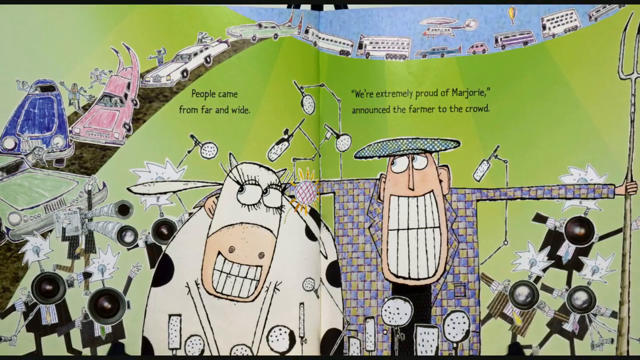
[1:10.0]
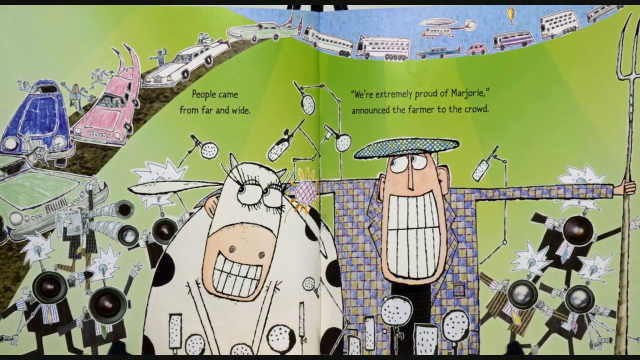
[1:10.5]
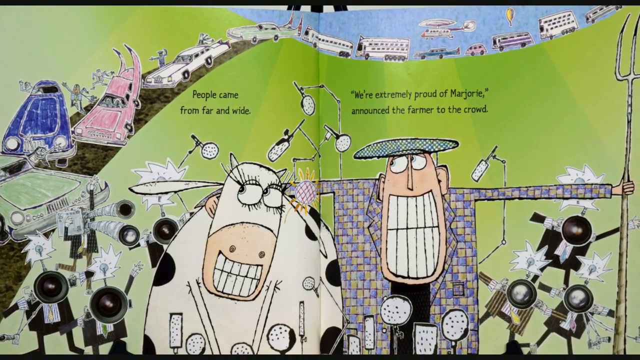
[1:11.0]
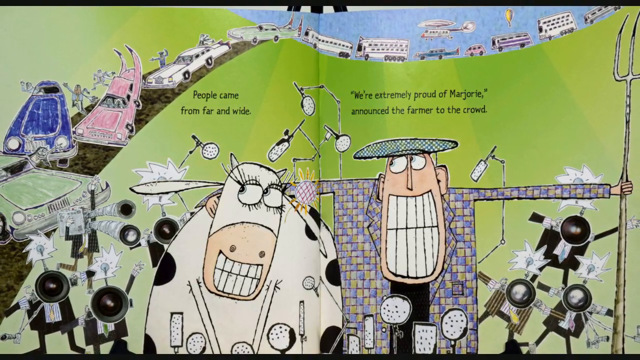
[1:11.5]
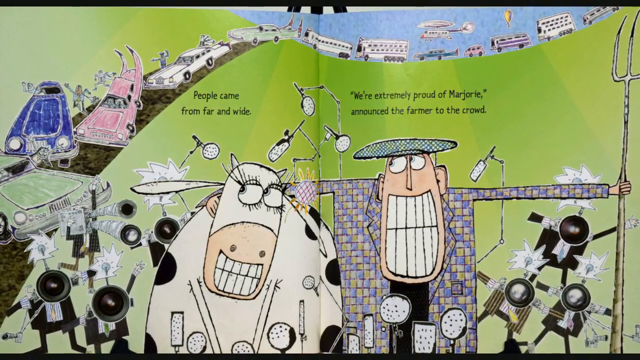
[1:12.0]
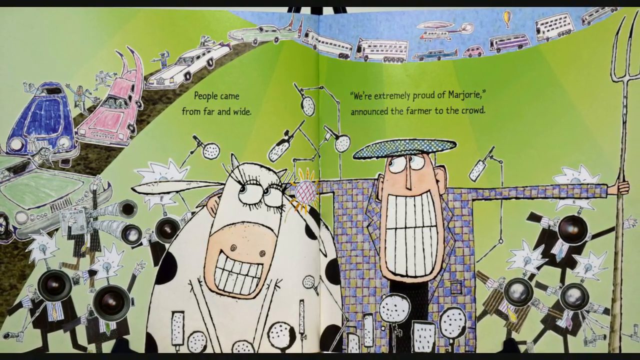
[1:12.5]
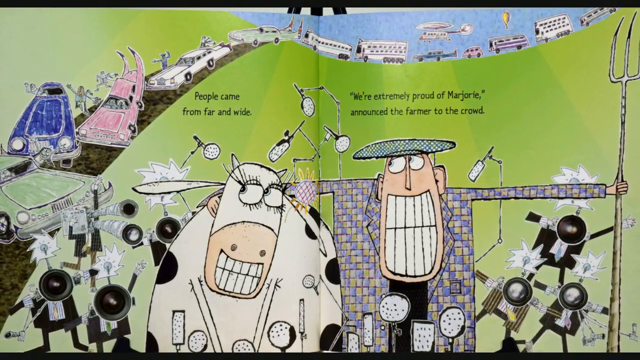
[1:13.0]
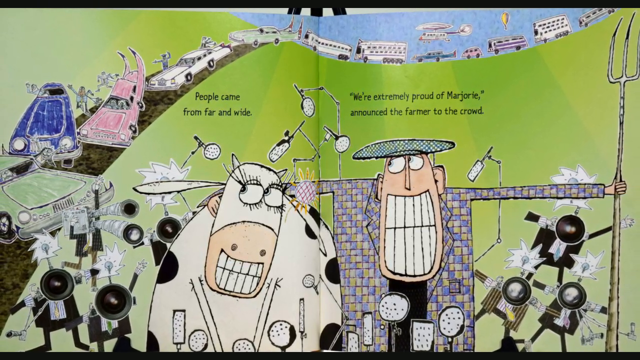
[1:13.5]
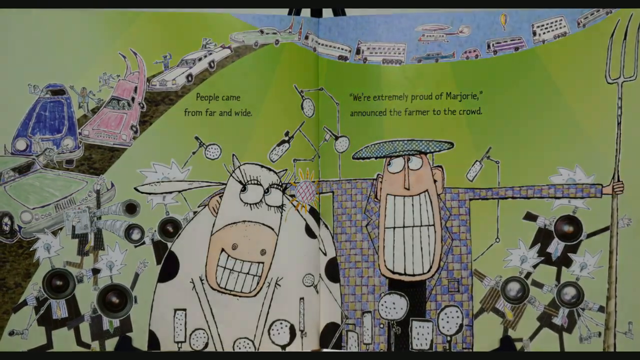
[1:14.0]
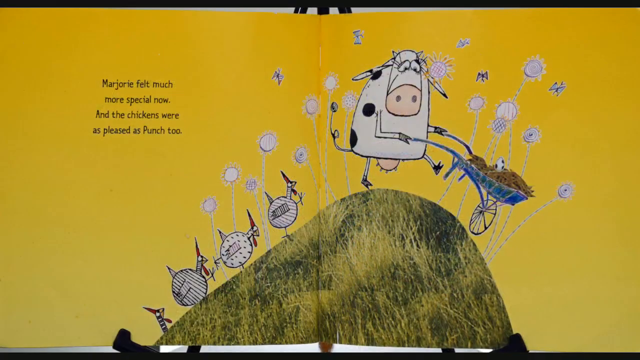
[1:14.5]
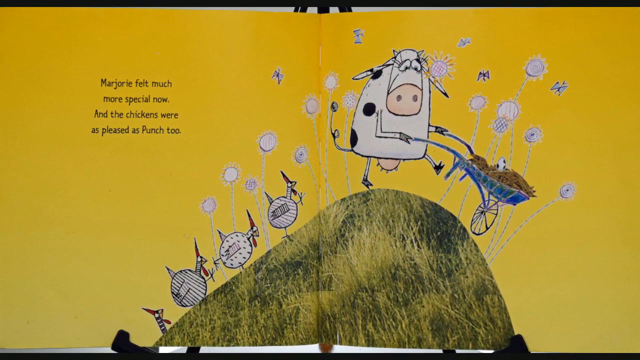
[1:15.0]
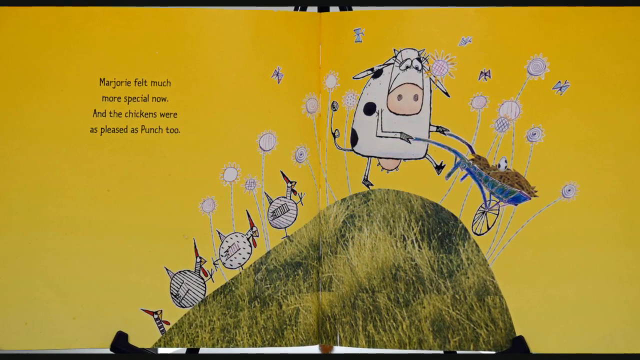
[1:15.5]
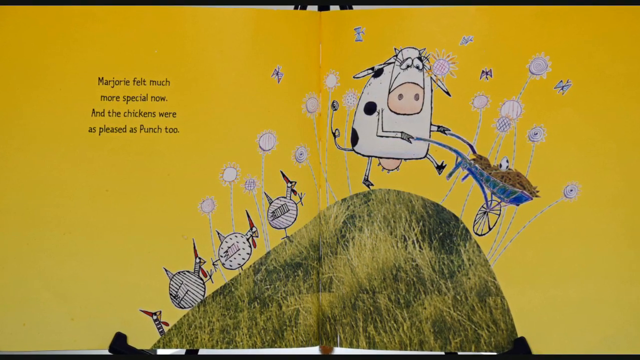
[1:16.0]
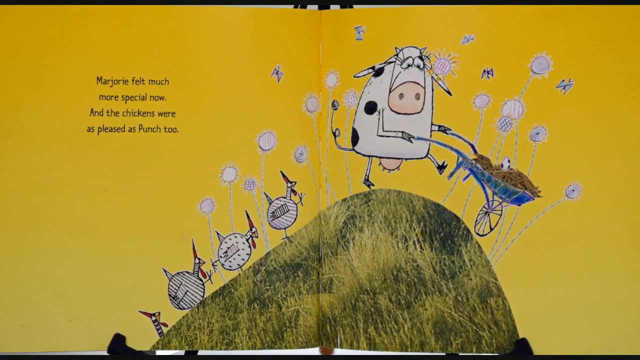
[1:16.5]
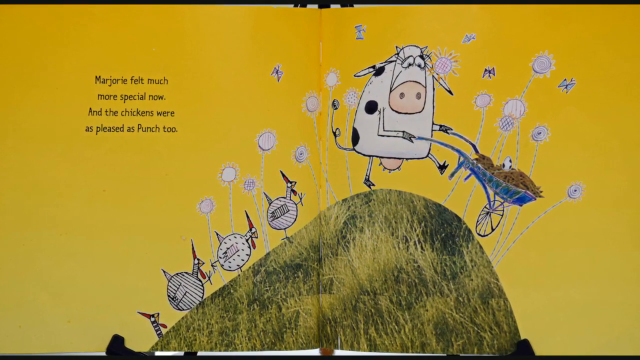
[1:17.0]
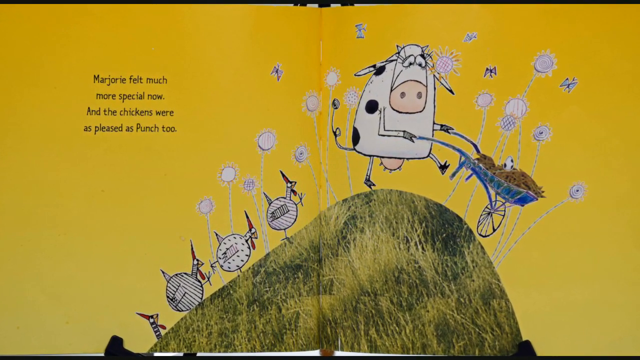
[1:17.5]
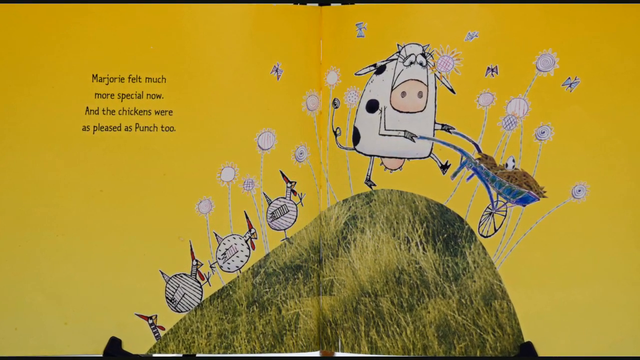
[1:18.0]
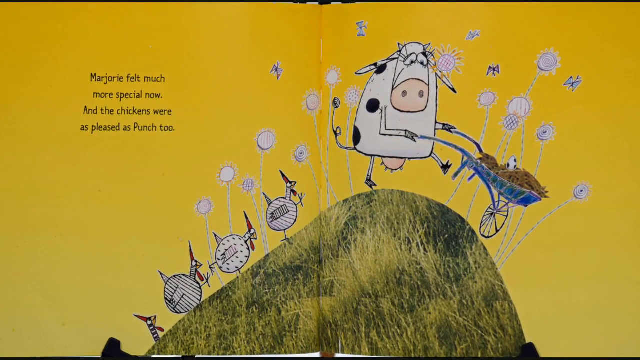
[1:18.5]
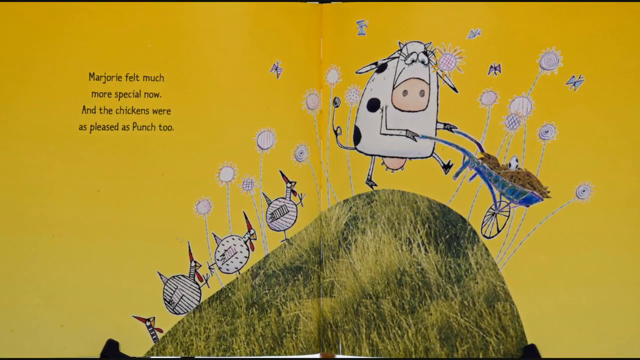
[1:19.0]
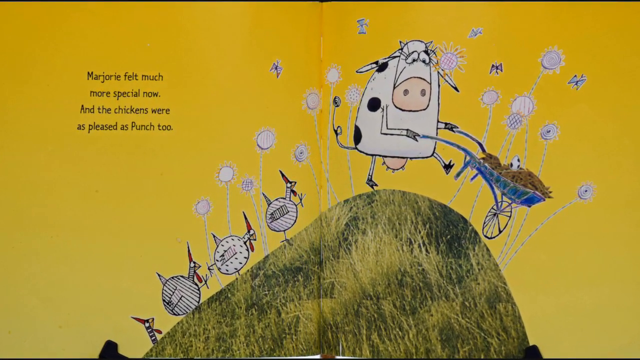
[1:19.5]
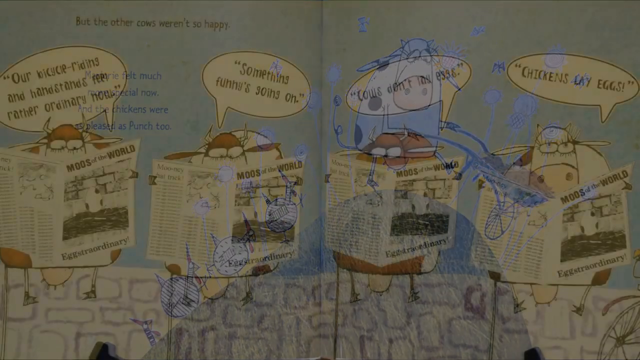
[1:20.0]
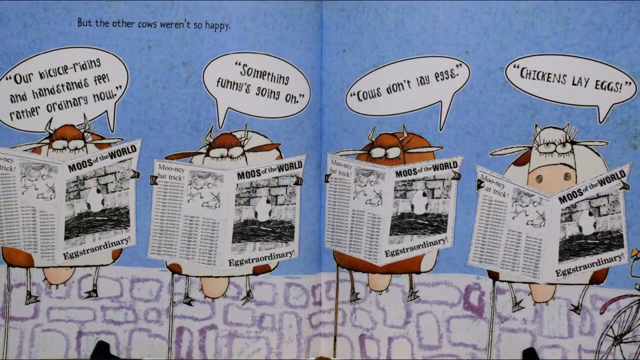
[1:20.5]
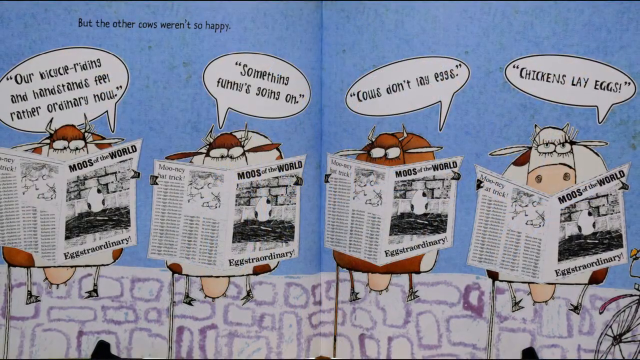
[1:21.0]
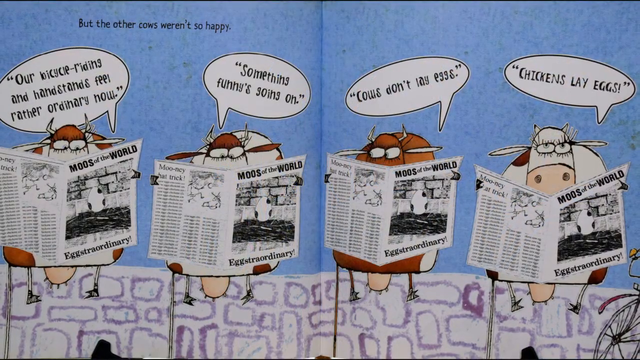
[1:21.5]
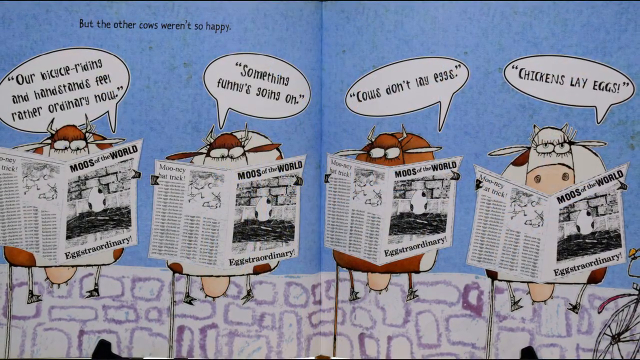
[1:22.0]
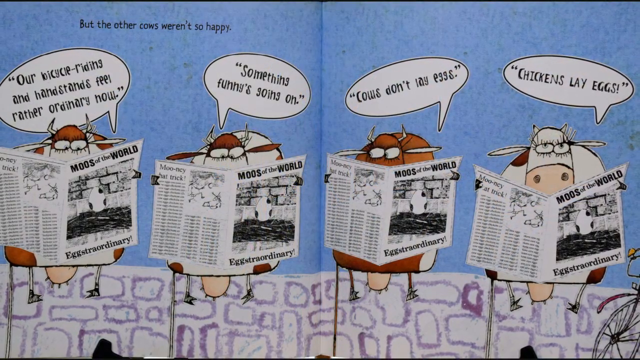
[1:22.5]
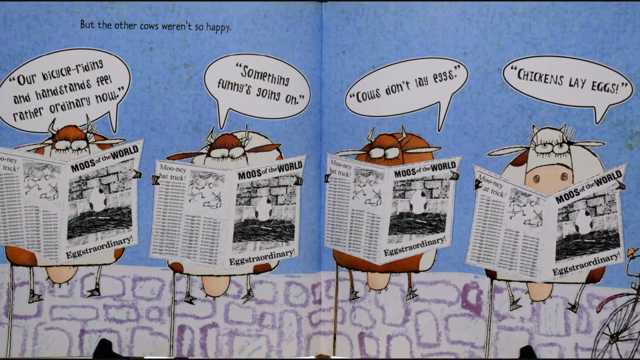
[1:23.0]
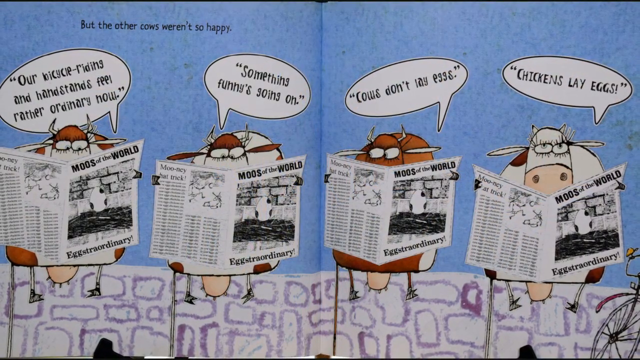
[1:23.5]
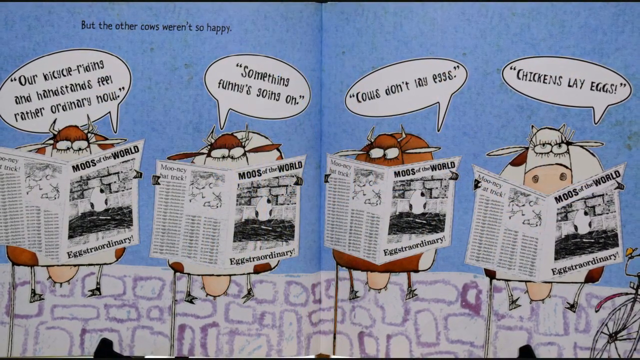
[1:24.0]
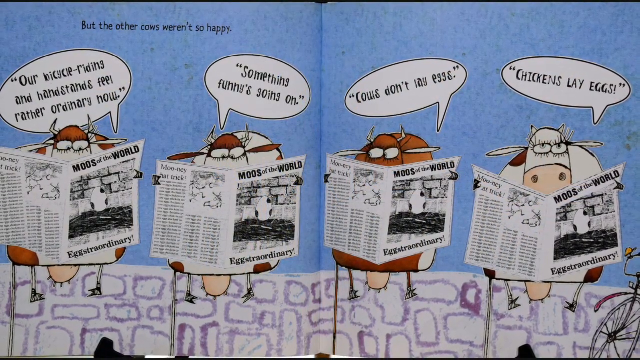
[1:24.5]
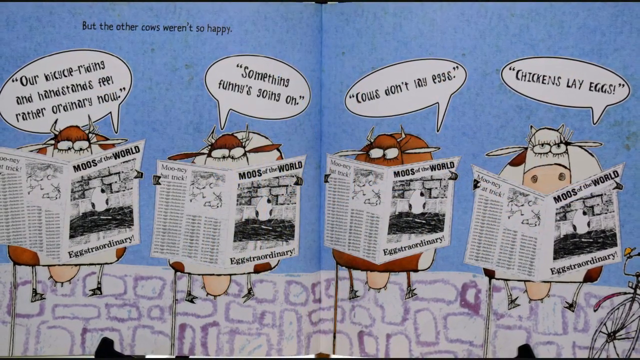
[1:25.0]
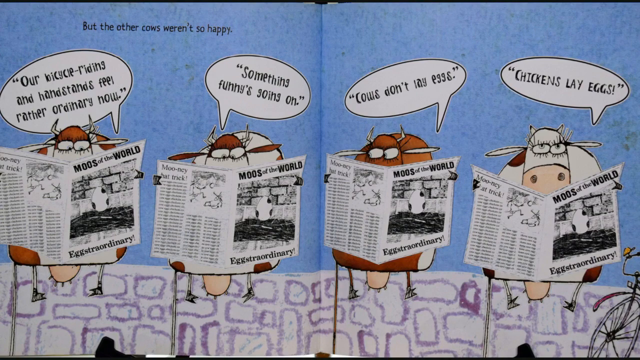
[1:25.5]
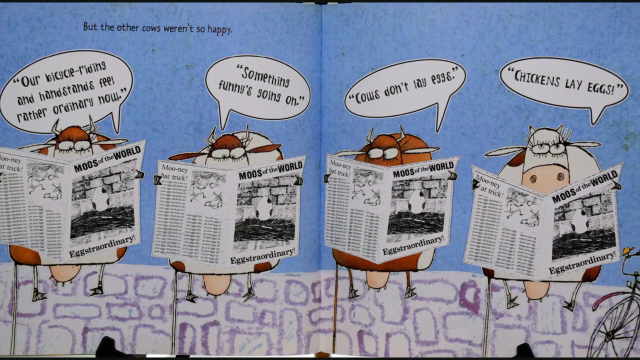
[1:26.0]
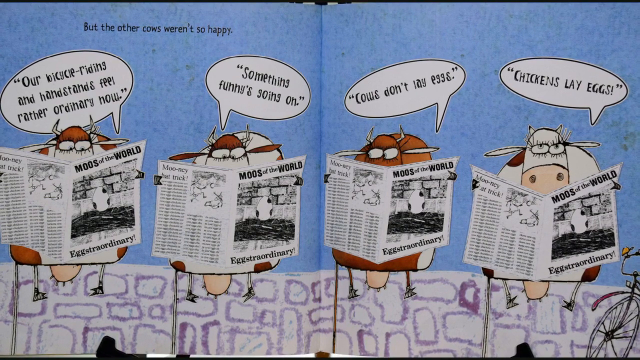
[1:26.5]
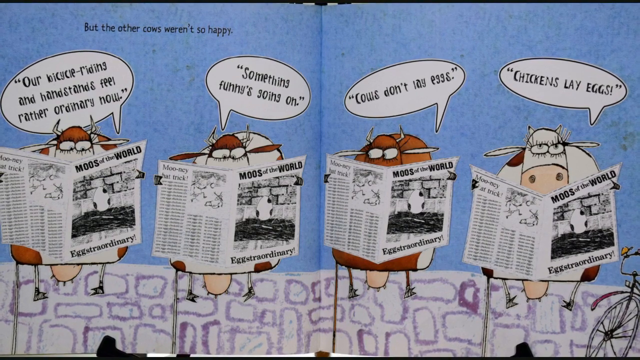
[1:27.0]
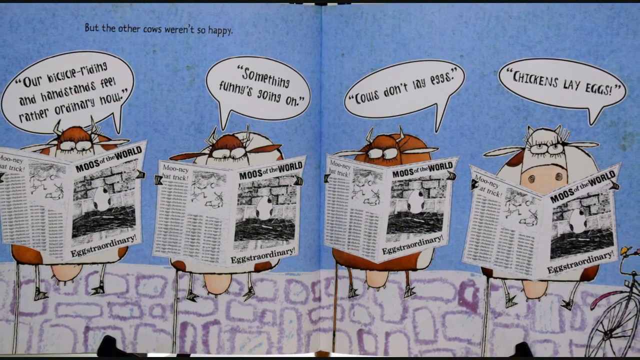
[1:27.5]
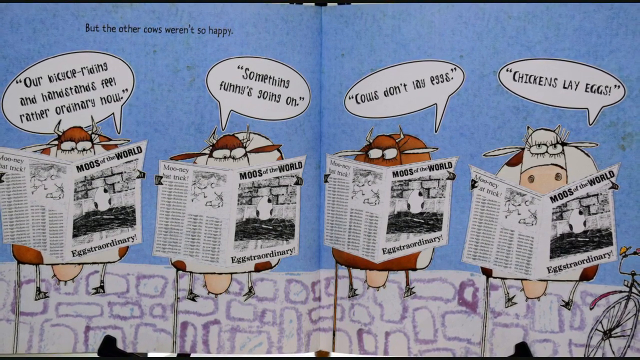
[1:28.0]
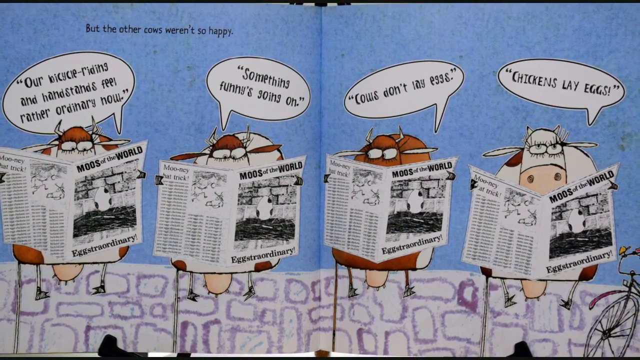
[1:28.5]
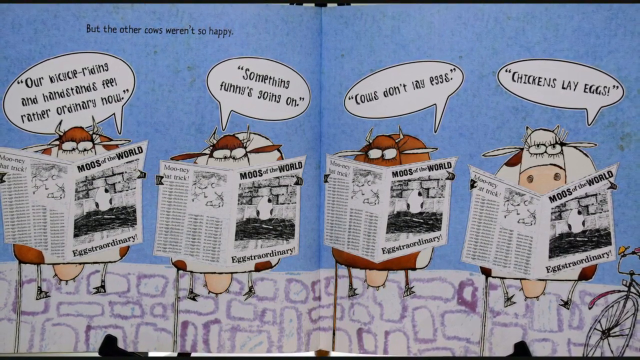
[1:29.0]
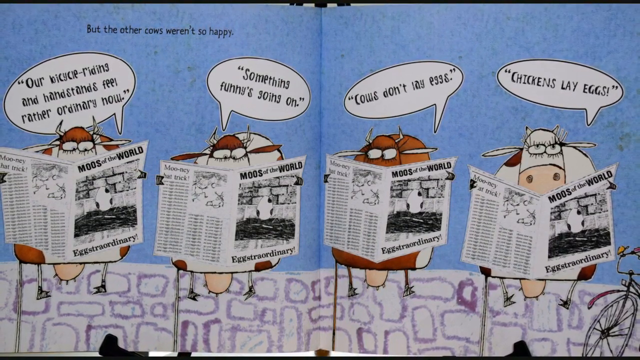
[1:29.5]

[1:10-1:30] Marjorie the cow is very proud that she has laid an egg. On the left of the next page the text reads "Marjorie felt much more special now and the chickens were as pleased as punched too." Marjorie pushes a wheelbarrow up a hill, carrying her polka-dot egg in straw, kind of like a nest built for the egg, and four chickens come up the hill behind her. The video then cuts to the next page, which reads "But the other cows weren't so happy." Cows sit reading the newspaper; one says "Our bicycle riding and handstands feel rather ordinary now," the next says "Something funny is going on," the next says "Cows don't lay eggs," and the very last cow looks up, very shocked, and says "And chickens lay eggs!"